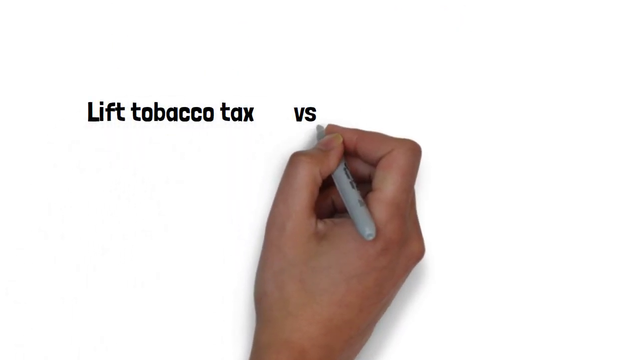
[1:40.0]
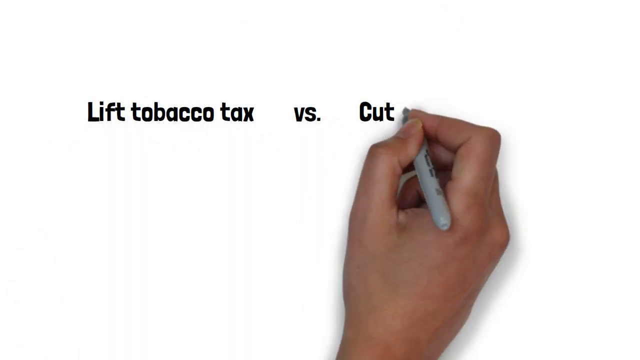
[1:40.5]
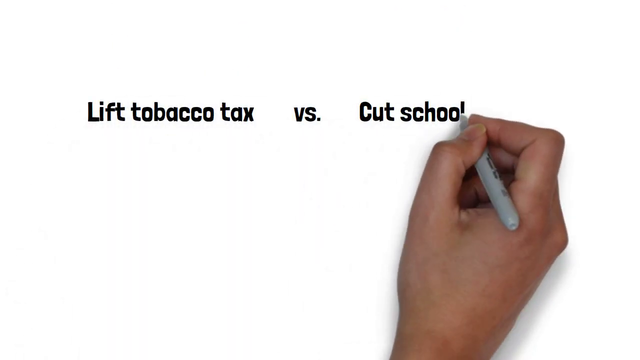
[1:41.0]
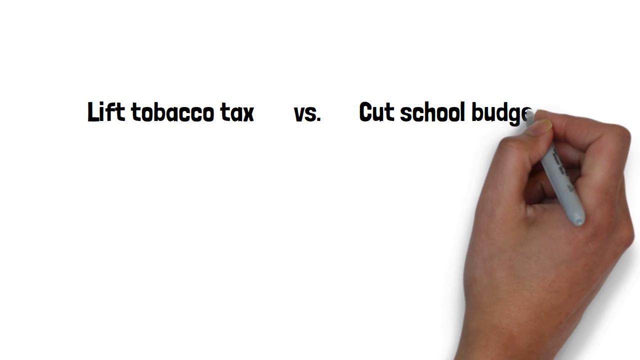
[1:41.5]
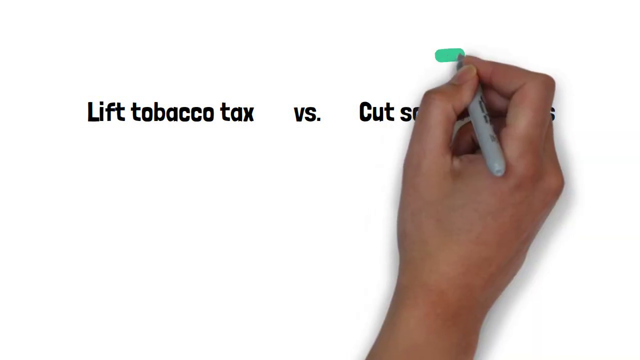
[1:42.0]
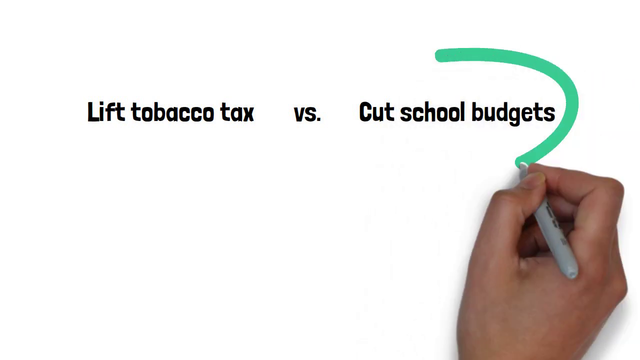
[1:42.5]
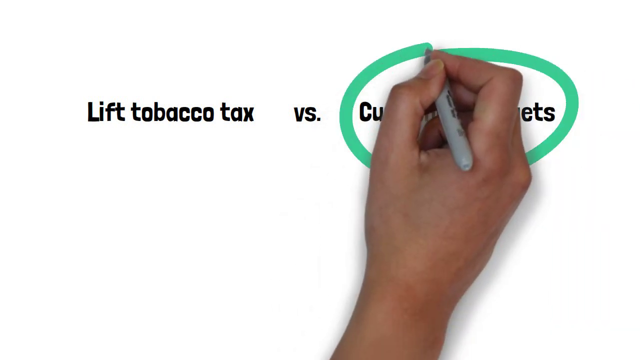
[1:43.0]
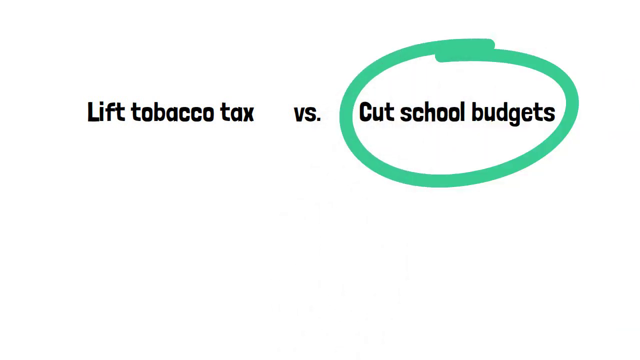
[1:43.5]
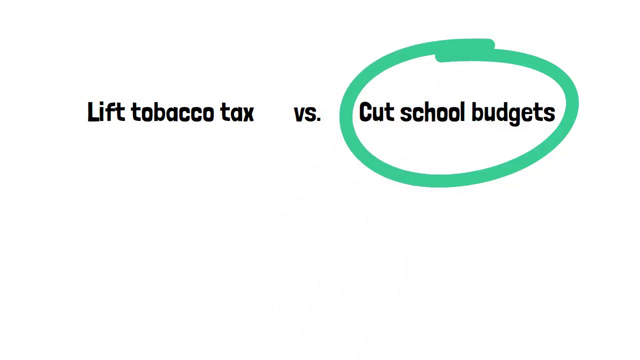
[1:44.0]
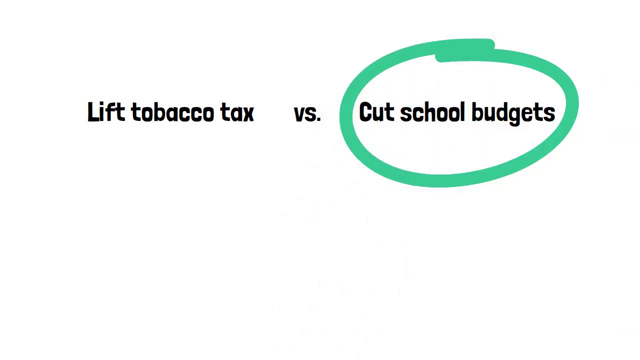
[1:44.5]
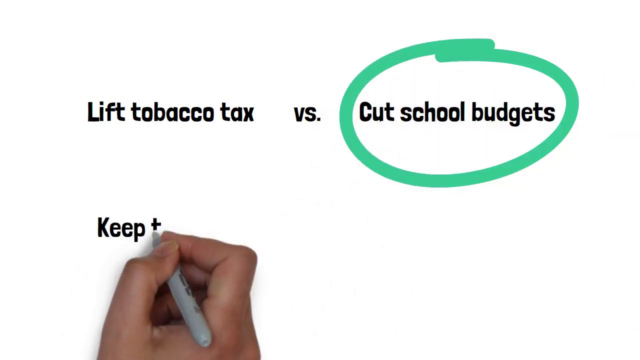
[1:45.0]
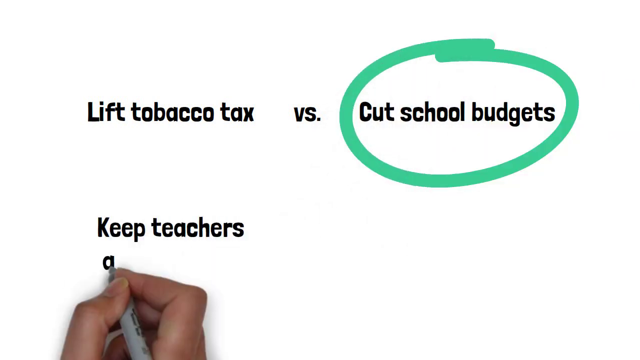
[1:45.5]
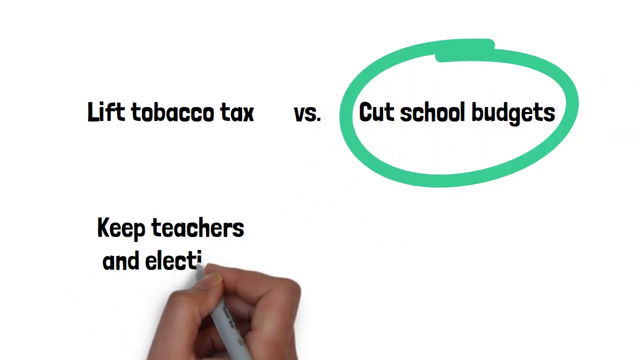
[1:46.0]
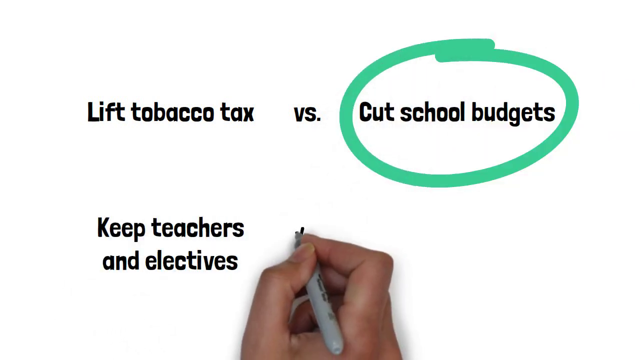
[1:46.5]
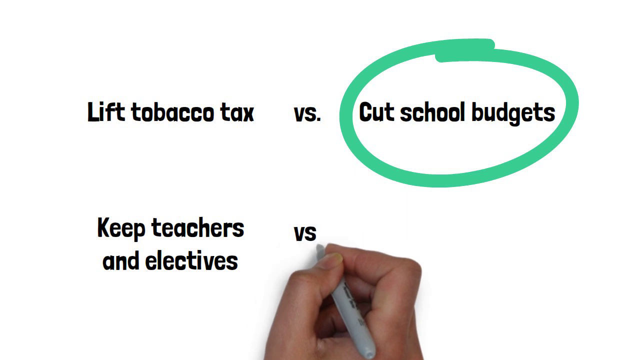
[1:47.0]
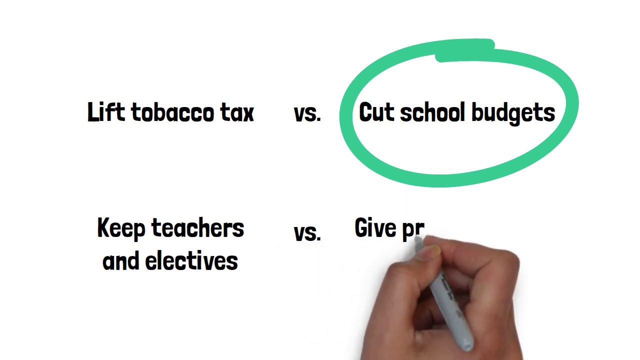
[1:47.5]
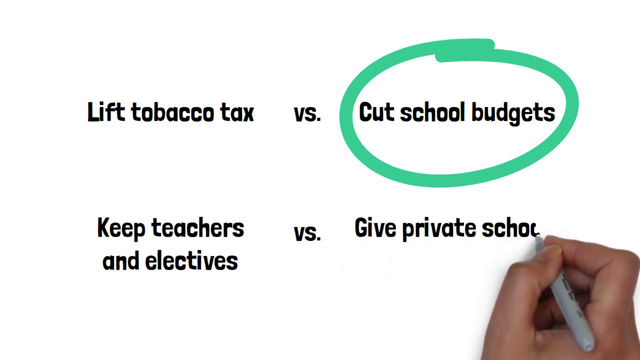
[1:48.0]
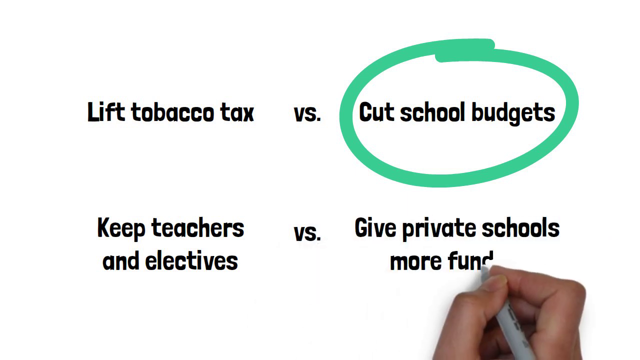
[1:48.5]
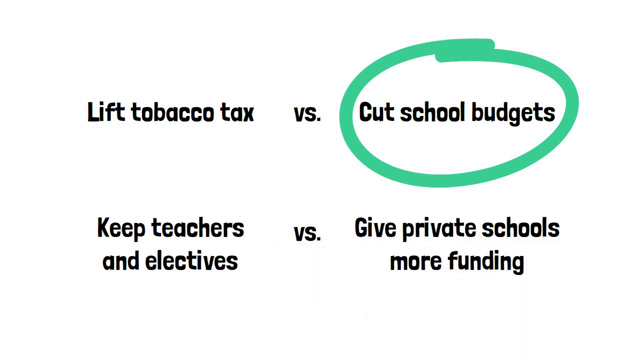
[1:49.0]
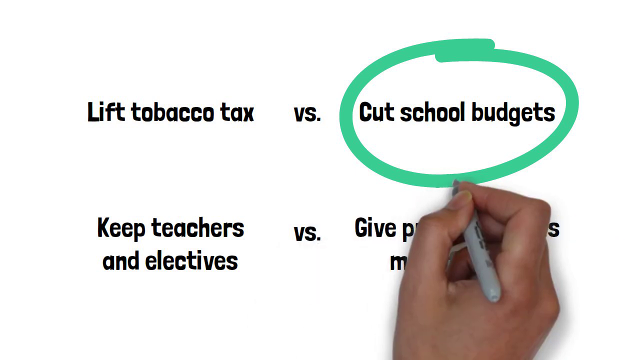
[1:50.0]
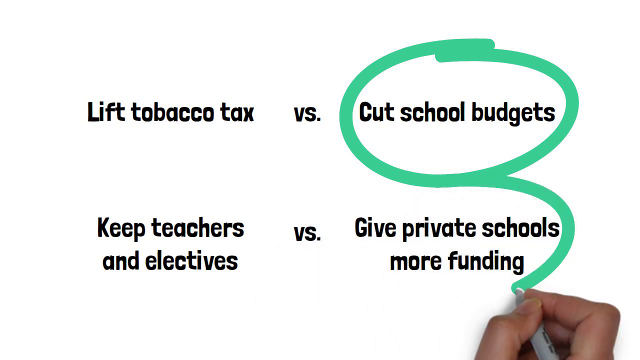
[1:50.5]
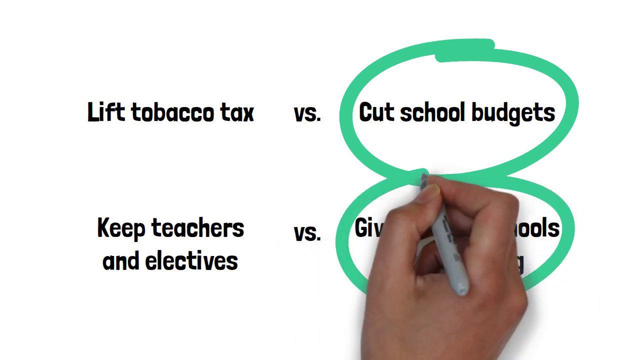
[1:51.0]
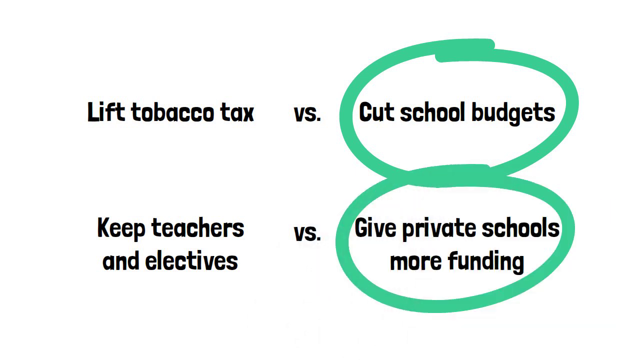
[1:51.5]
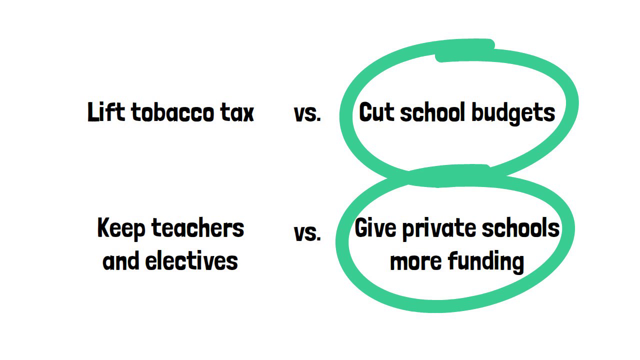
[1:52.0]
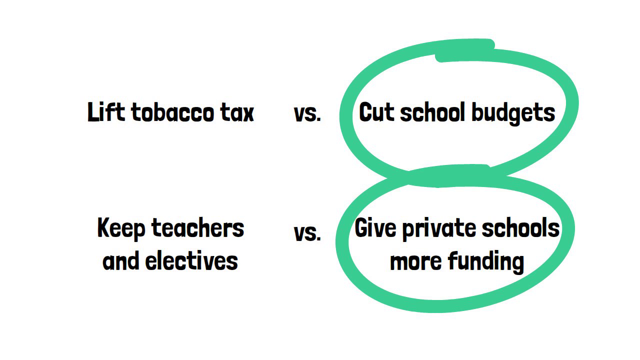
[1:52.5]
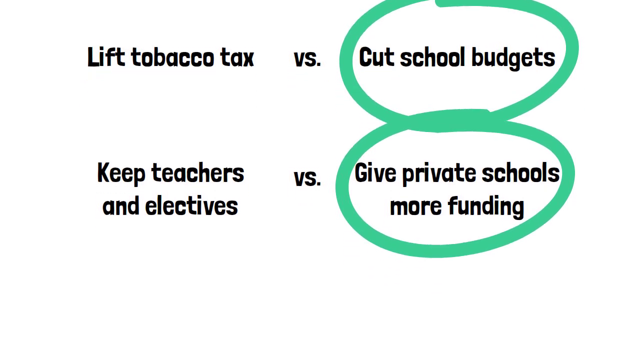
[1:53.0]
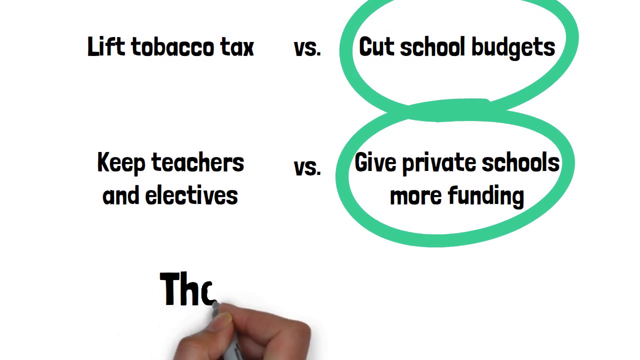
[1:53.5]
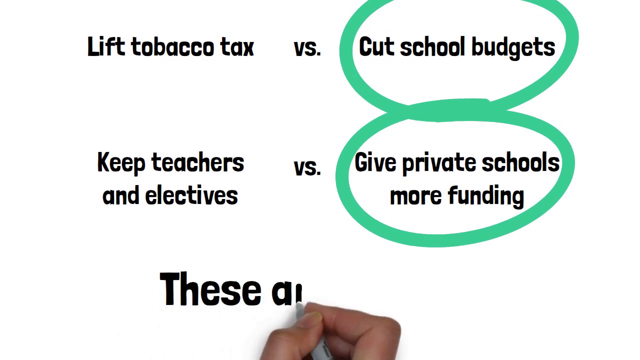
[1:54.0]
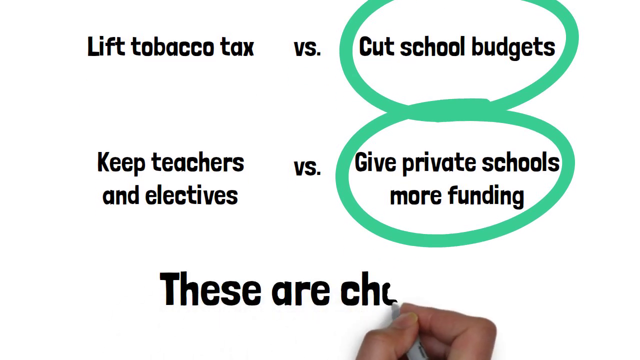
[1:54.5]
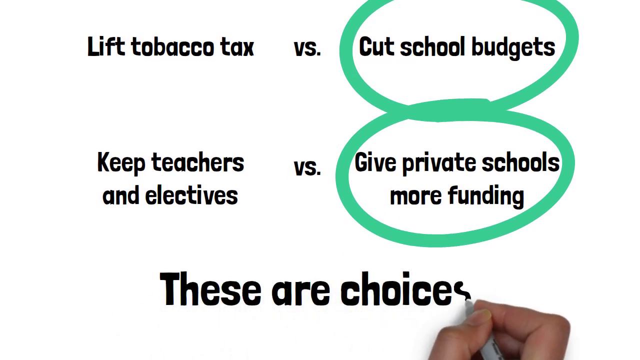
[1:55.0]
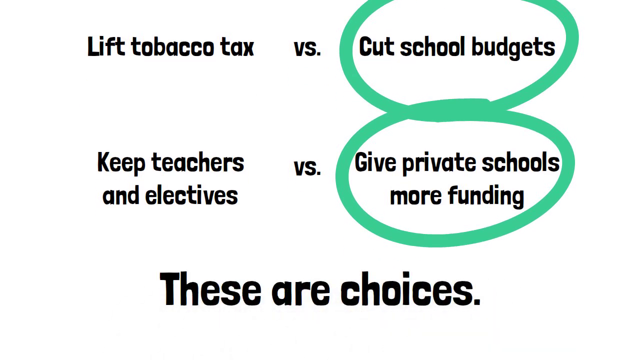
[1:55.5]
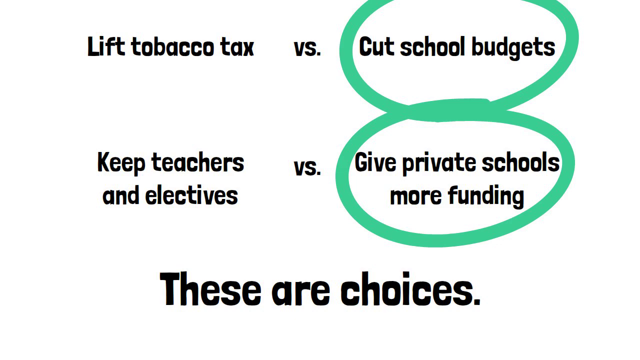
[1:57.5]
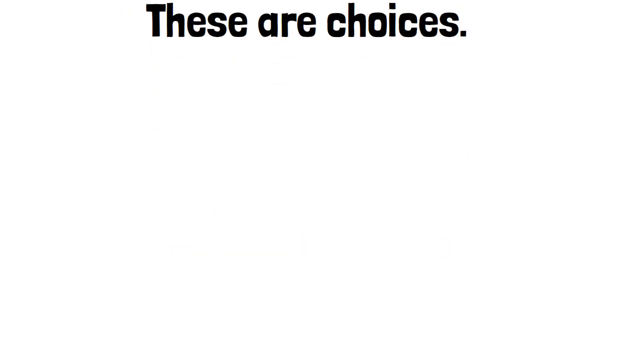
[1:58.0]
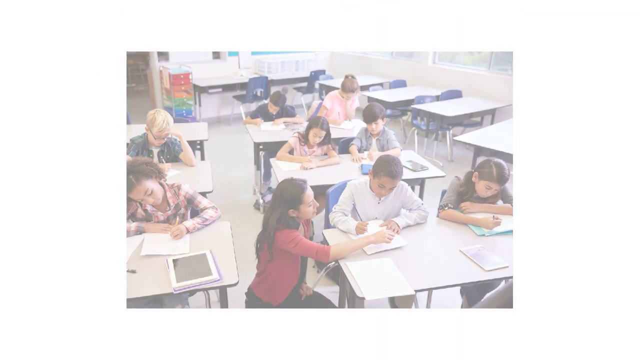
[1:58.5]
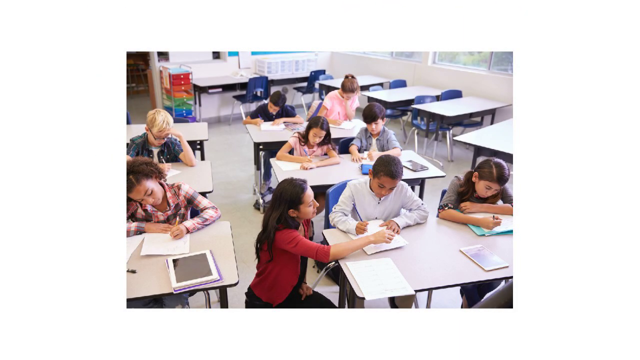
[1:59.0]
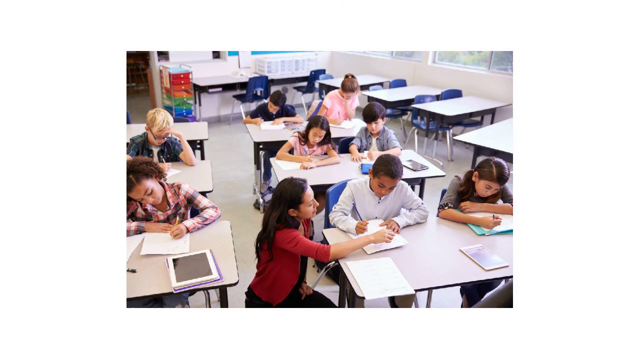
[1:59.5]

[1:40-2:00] The hand continues the sentence, writing "cut school budgets," so the full text reads "lift tobacco tax versus cut school budgets." It draws a thick green-turquoise circle around "cut school budgets." At the bottom left of the screen, it writes "keep teachers and electives versus give private schools more funding," then uses the same turquoise color to circle "give private schools more funding." The two lines of text move up slightly, creating an open white space at the bottom, where the hand writes "these are choices." The text then lifts up, leaving the screen white, and an image appears in the center showing a teacher in red in a classroom full of young students. The teacher is leaning, helping one of the students in the front row.